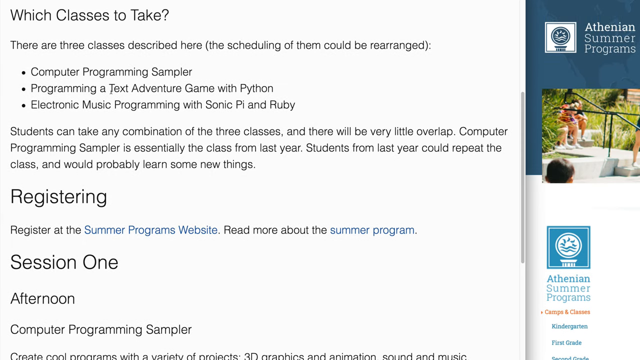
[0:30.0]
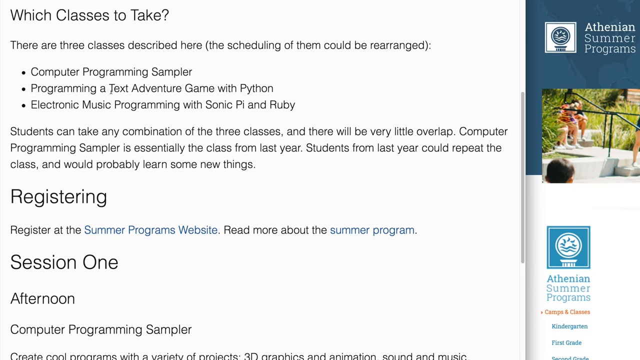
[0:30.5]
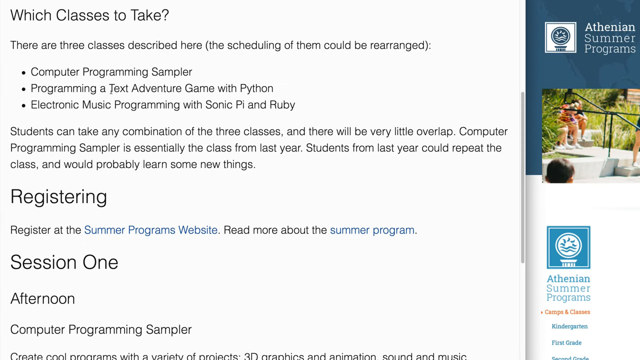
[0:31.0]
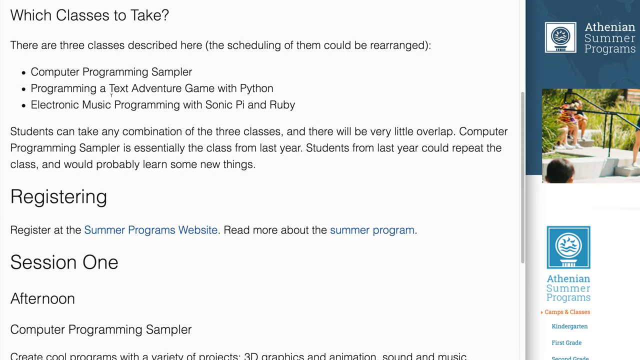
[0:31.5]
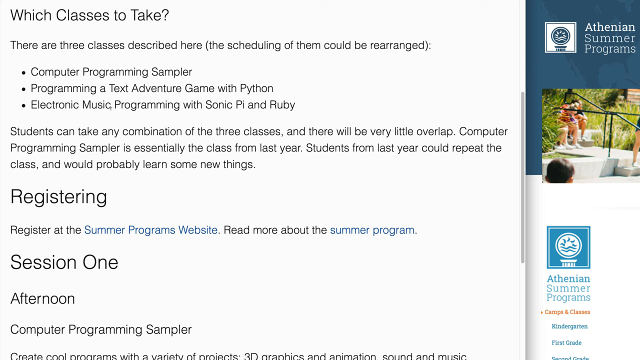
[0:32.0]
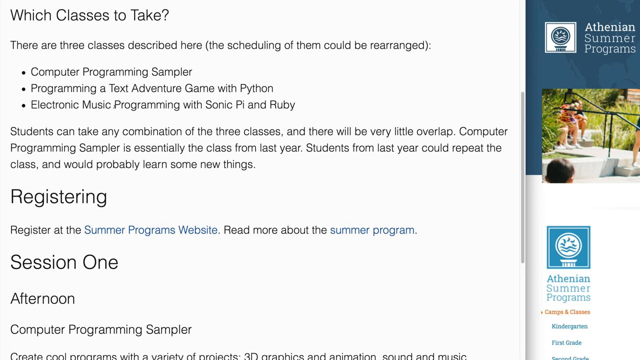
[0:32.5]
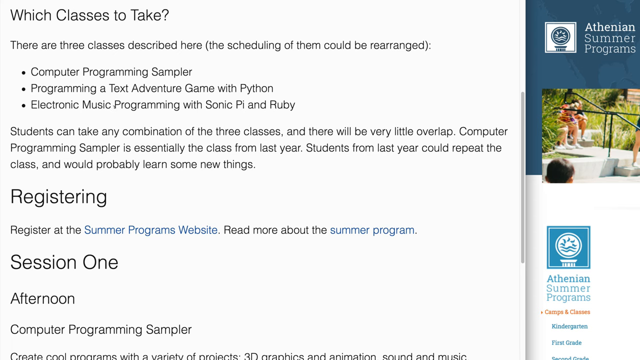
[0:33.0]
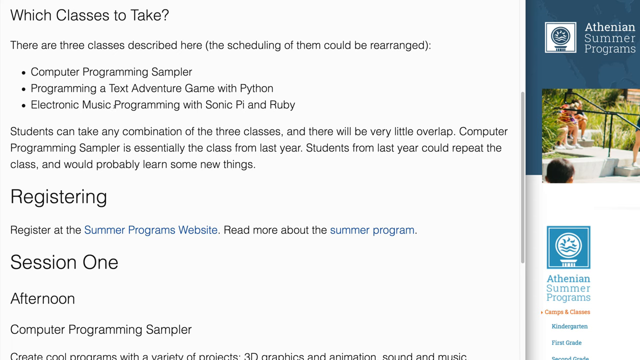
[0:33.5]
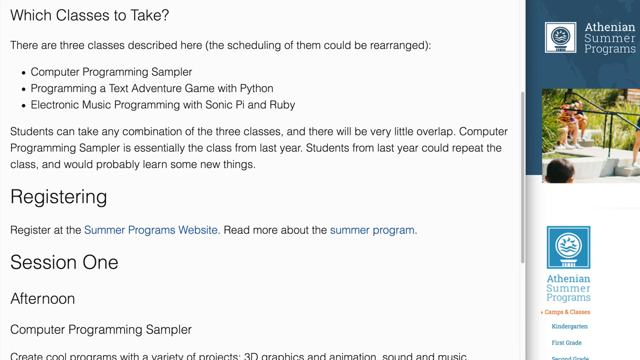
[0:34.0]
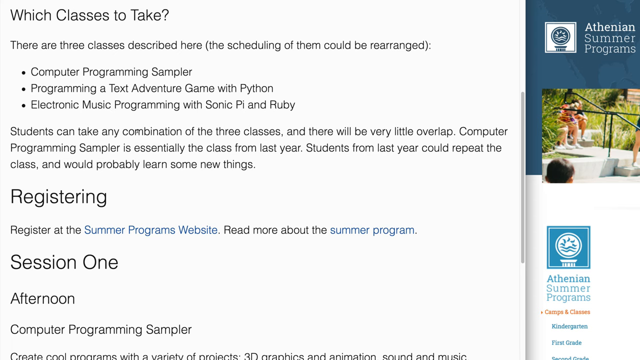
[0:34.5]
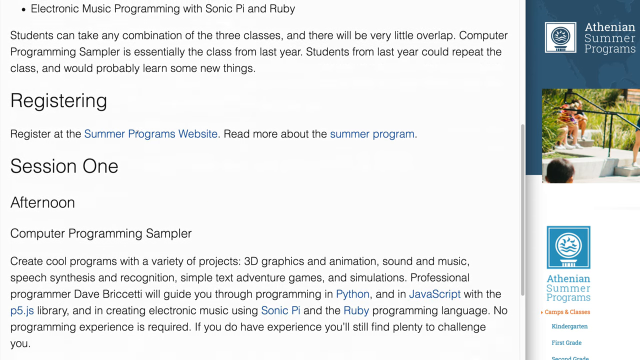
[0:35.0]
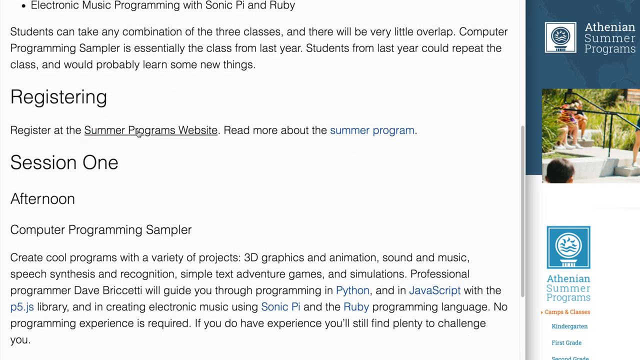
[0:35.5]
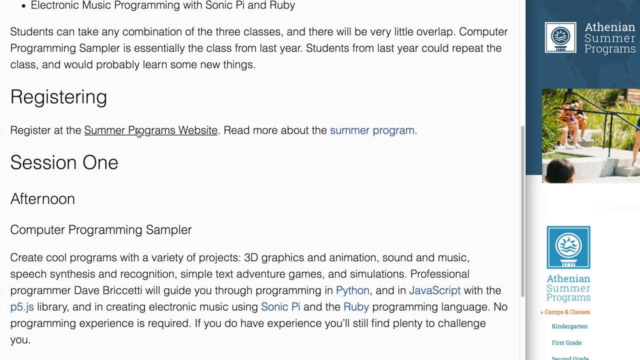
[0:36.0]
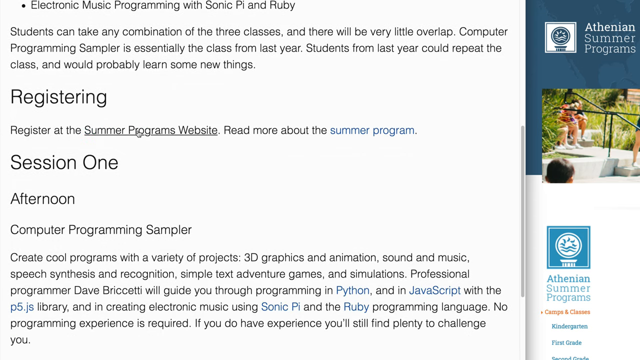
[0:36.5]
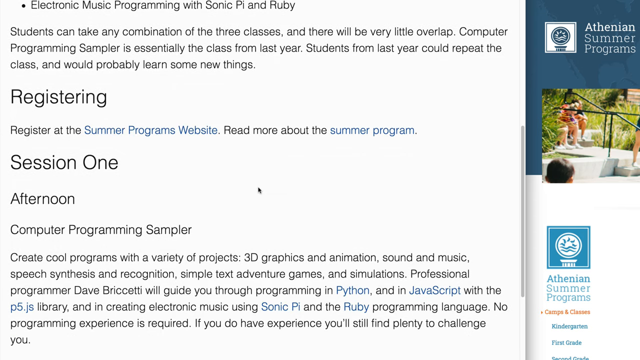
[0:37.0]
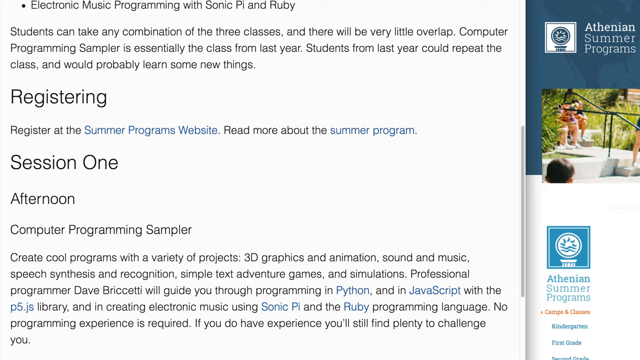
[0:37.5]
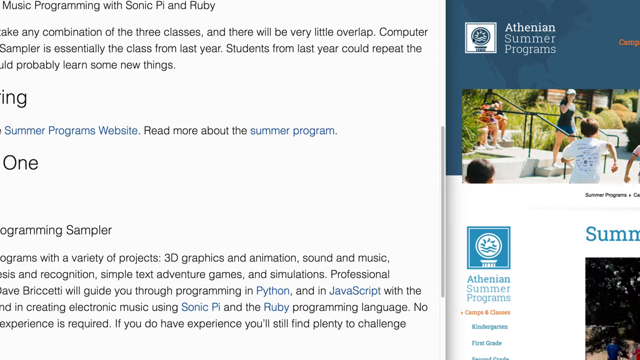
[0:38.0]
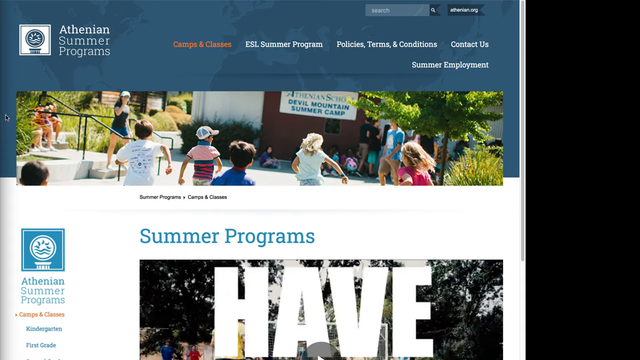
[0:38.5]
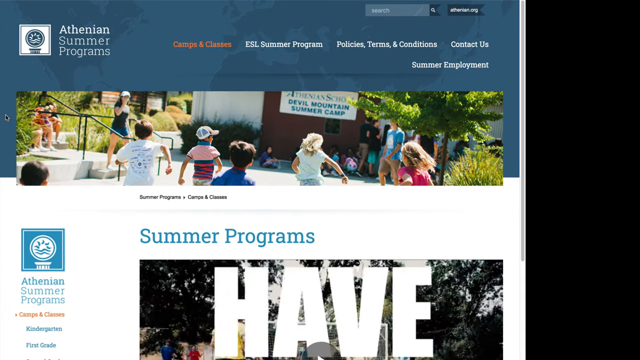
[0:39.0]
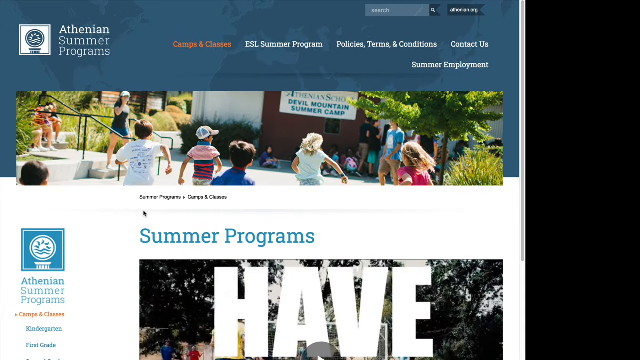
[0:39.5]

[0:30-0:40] The words "which class to take" are at the top of the screen. Underneath is text stating that three classes are described and their scheduling could be rearranged, followed by three bullet points: "computer programming sampler", "programming a text adventure game with Python", and "electronic music programming with Sonic Pi and Ruby". Text below says students can take any combination of the three classes with very little overlap, that the computer programming sampler is essentially the class from last year, and that students from last year could repeat it and would probably learn some new things. Beneath this is a heading, "registering", with the words "Register at the Summer Programmes website", where "Summer Programmes website" is in blue and looks as though it may be a clickable link. Then come the words "read more about the Summer Programme", with "Summer Programme" in blue, presumably also a link. Next is information about Summer Session 1 in the afternoon: "Computer programming sampler". The view then goes over to the website and flicks back to the registering page.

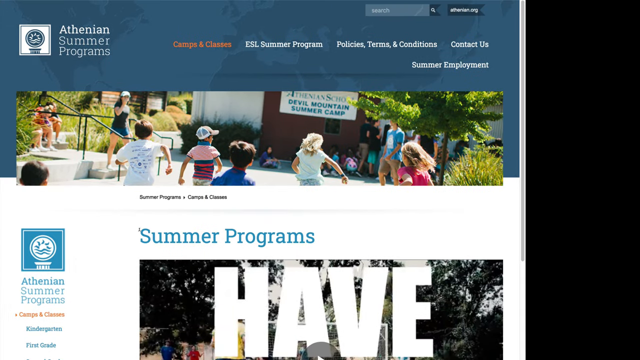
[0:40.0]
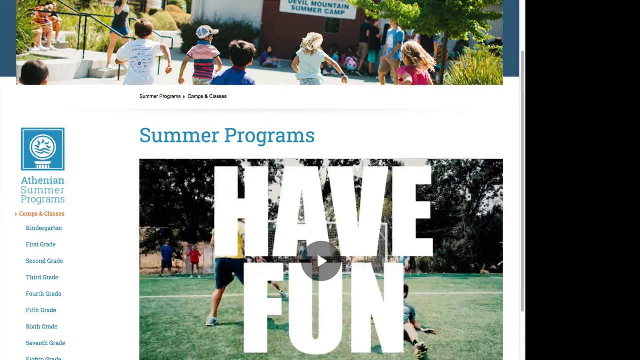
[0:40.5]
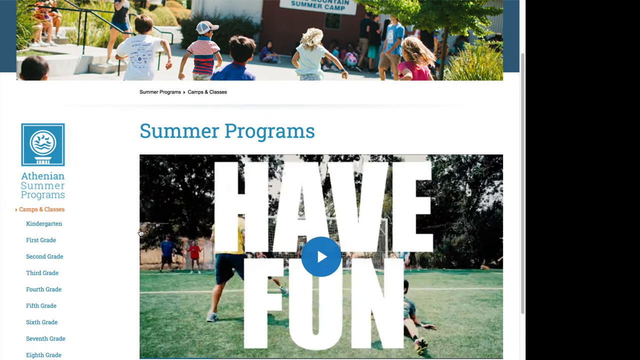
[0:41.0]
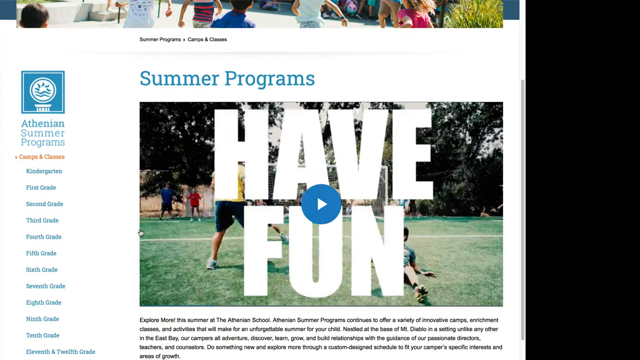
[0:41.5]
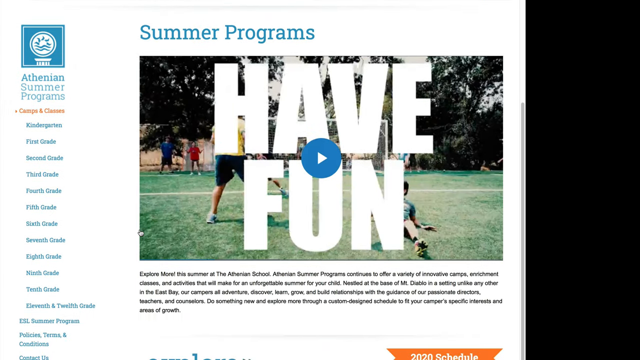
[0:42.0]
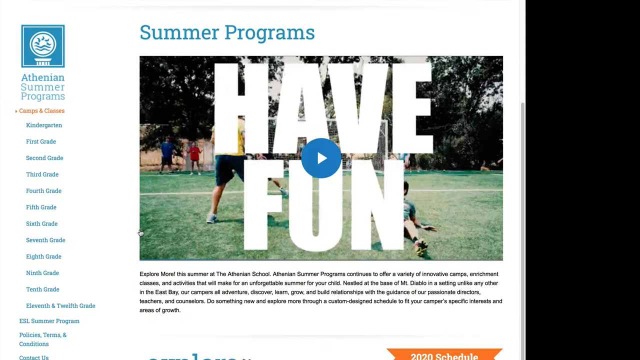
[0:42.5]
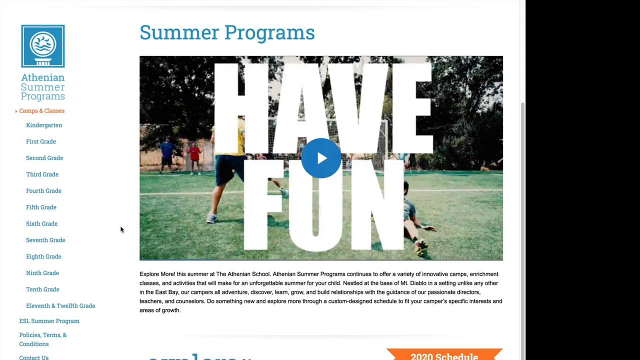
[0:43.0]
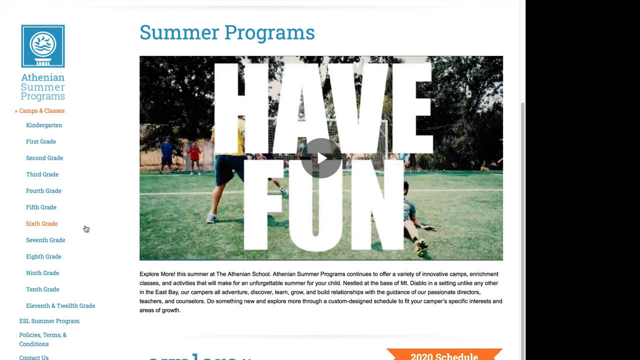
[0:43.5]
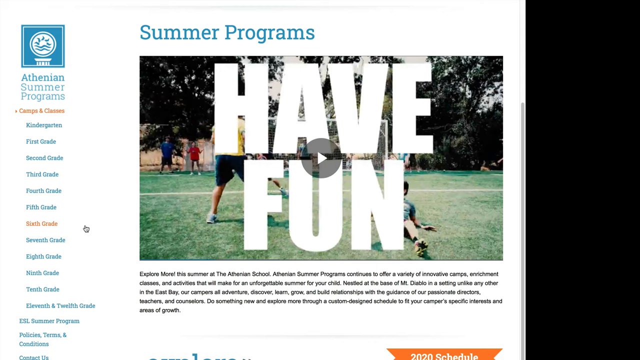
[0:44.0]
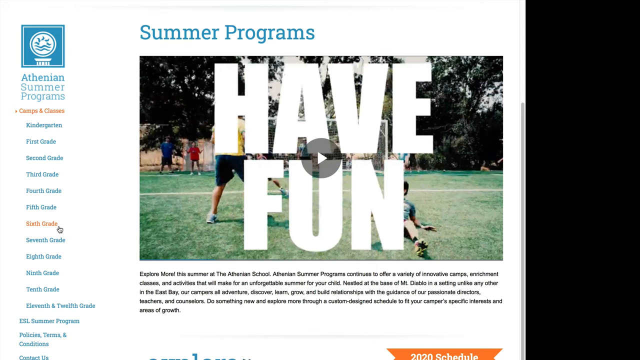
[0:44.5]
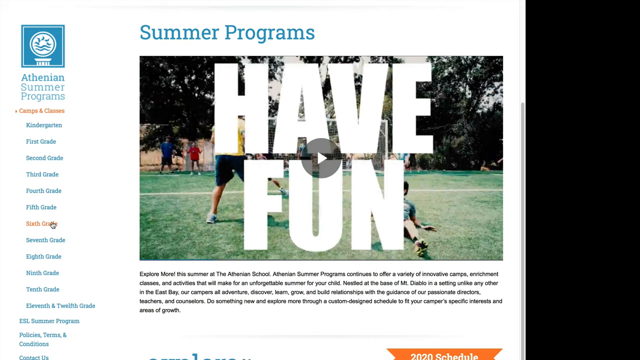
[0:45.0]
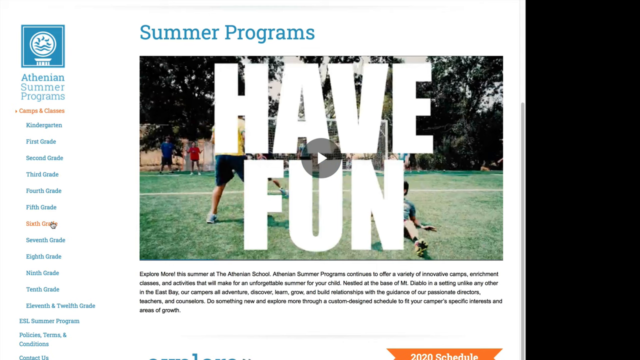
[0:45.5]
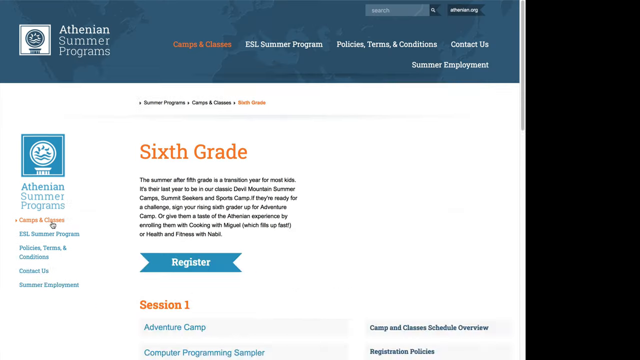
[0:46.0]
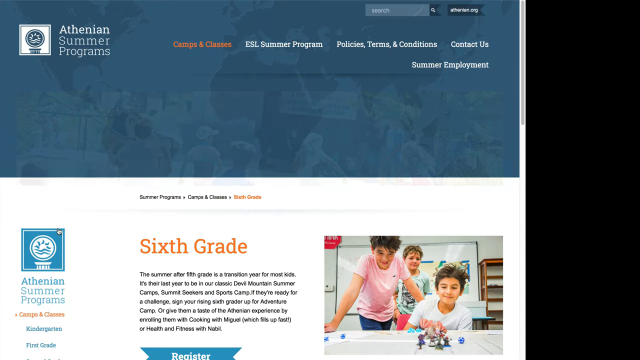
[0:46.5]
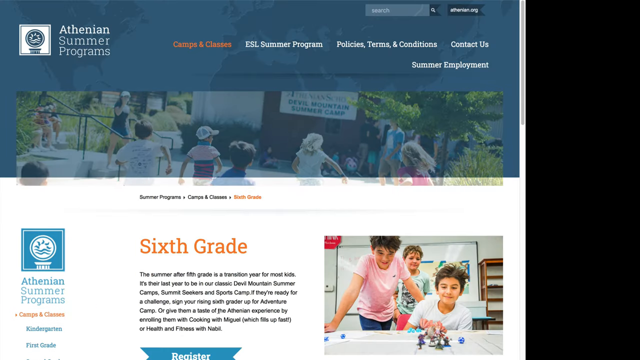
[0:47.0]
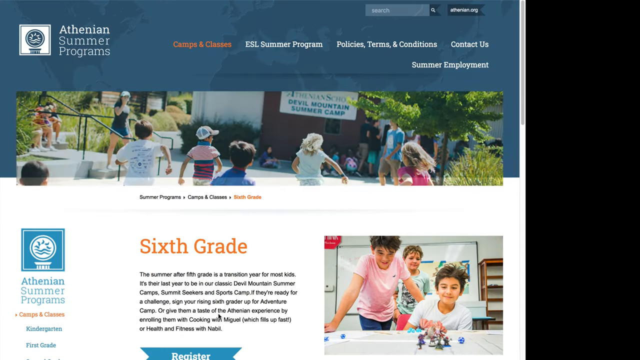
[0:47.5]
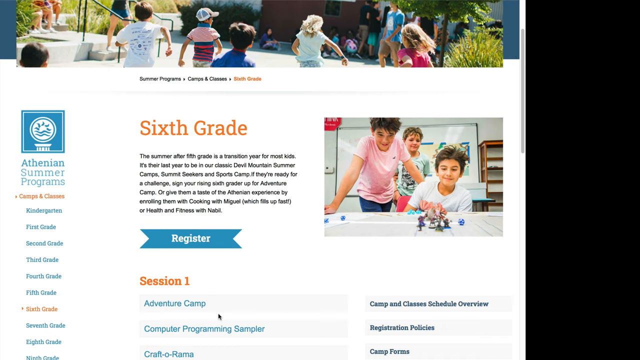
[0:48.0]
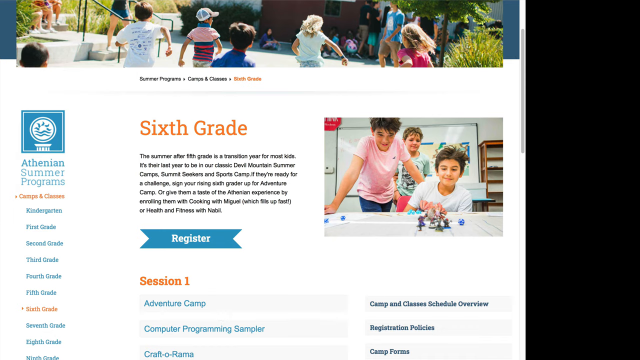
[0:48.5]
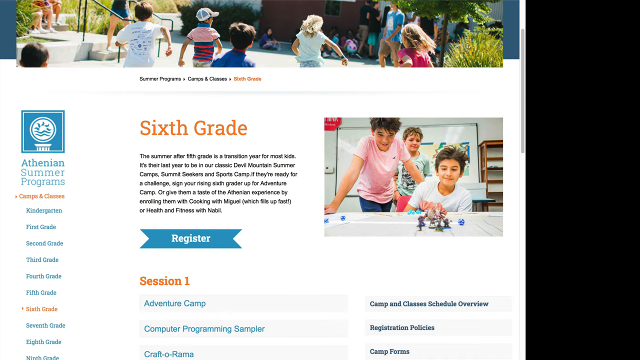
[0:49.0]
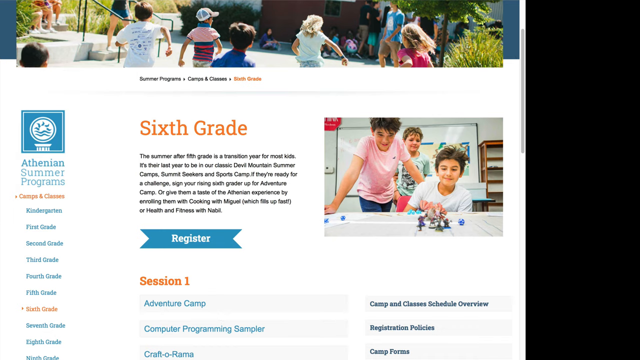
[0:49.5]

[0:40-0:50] The Athenian Summer Programme website is shown. Near the top of the page is a search bar, and under it are tabs that look to be Camps and Classes, ESL Summer Programme, Policies, Terms and Conditions, and Contact Us. It looks as though the person making the video has clicked on Camps and Classes, since it is highlighted in orange while the other tabs are white. The page has a lot of information about the summer program, including a video with "Have Fun" on it in big capital white letters, where it looks as though children are playing football in the background. The view then clicks over to a page that says "6th Grade", which can be registered for. There is a blue tab in a ribbon shape underneath some information about the 6th grade, and under that is information about the summer camp.